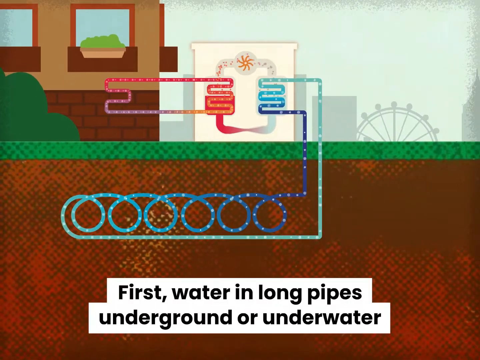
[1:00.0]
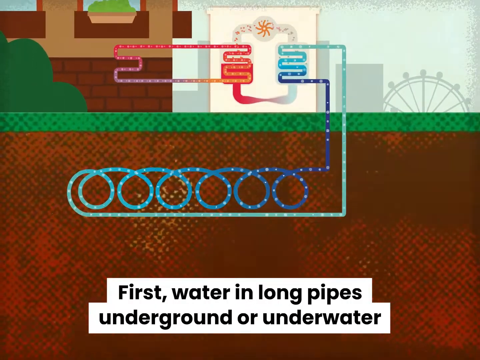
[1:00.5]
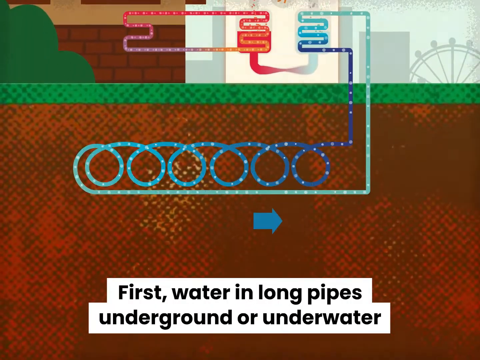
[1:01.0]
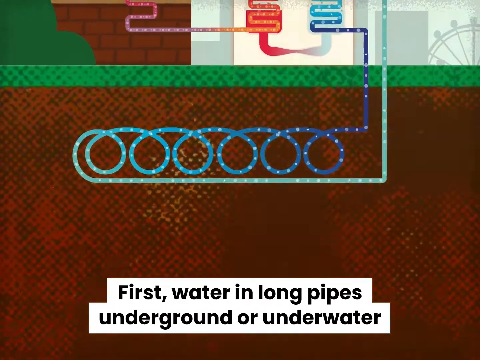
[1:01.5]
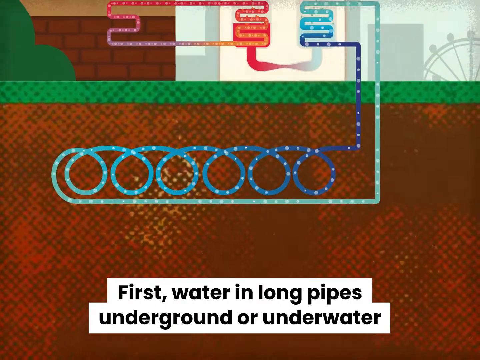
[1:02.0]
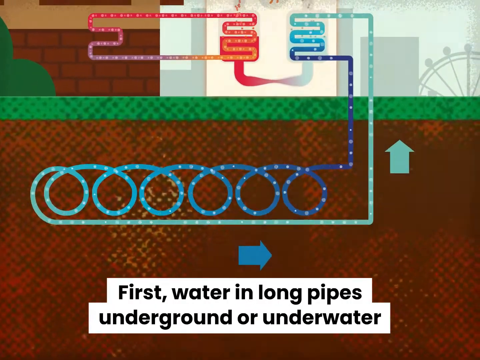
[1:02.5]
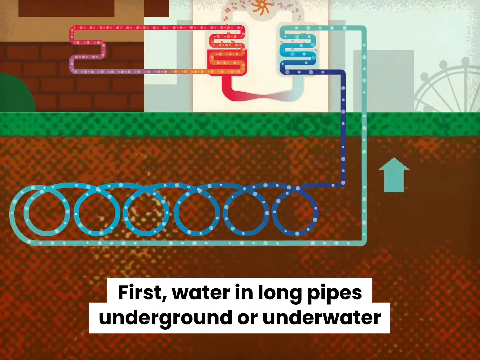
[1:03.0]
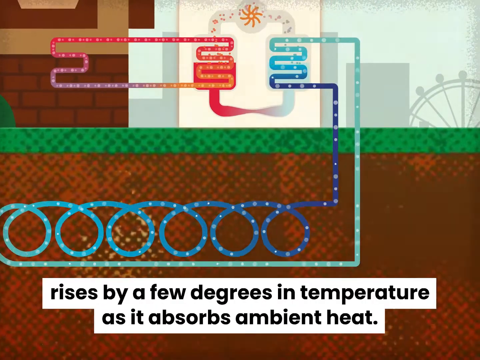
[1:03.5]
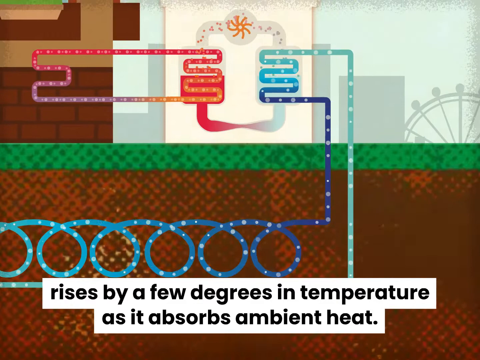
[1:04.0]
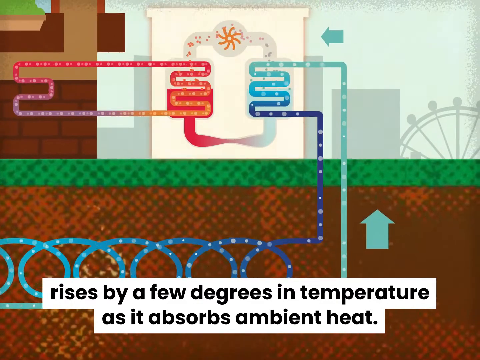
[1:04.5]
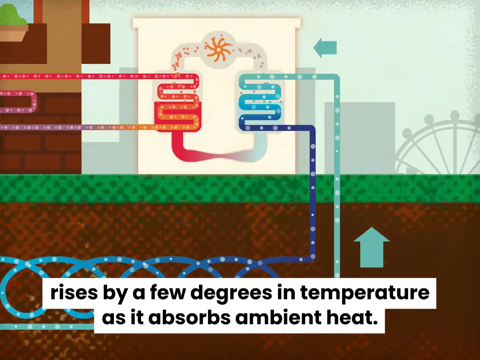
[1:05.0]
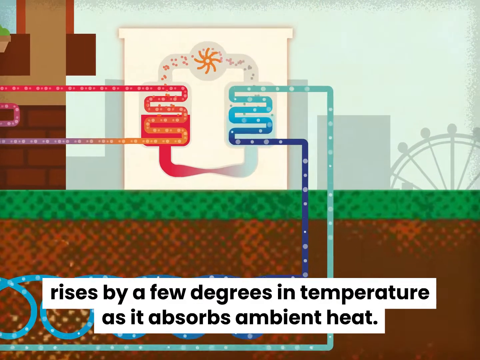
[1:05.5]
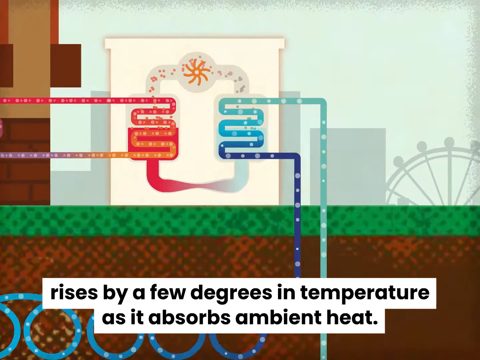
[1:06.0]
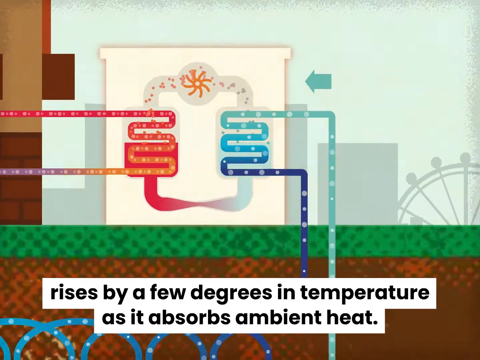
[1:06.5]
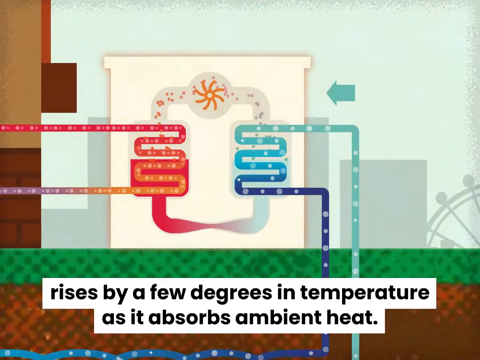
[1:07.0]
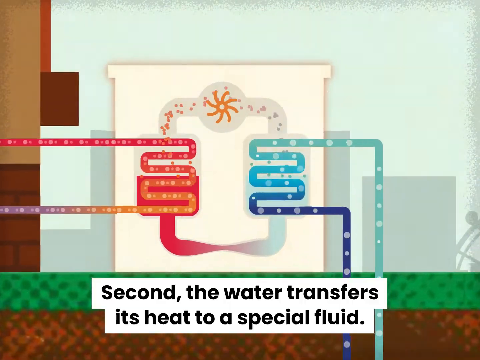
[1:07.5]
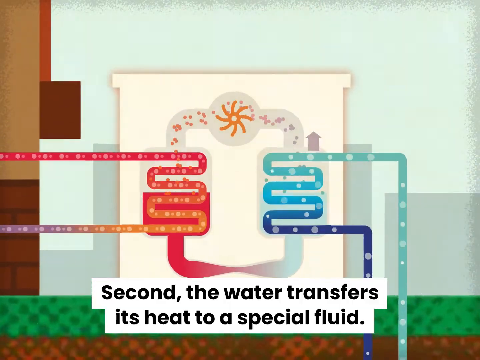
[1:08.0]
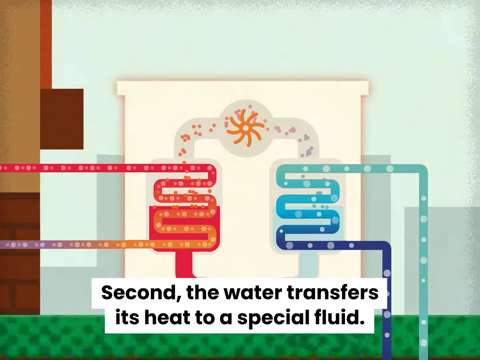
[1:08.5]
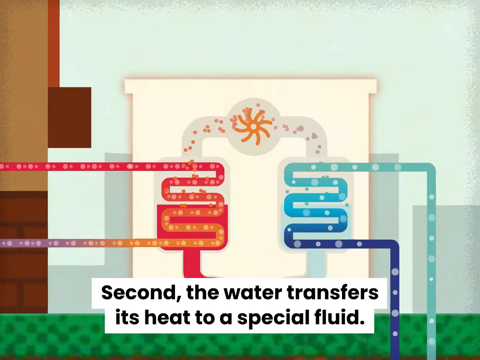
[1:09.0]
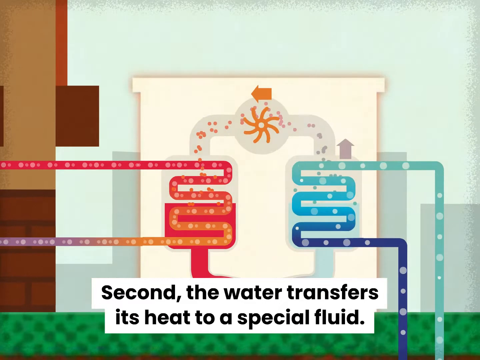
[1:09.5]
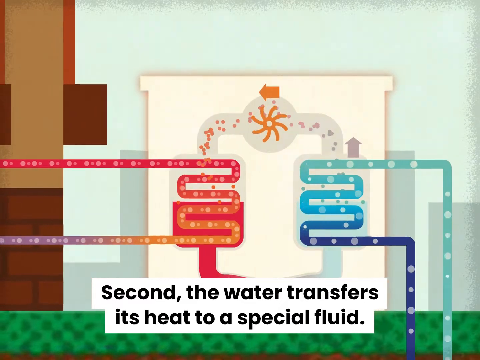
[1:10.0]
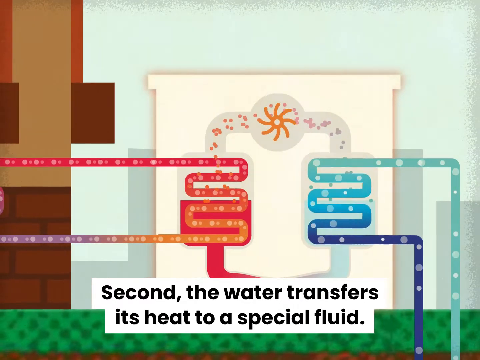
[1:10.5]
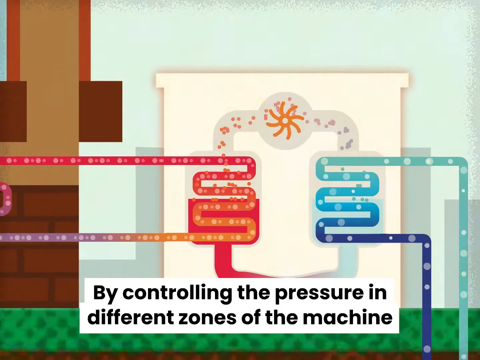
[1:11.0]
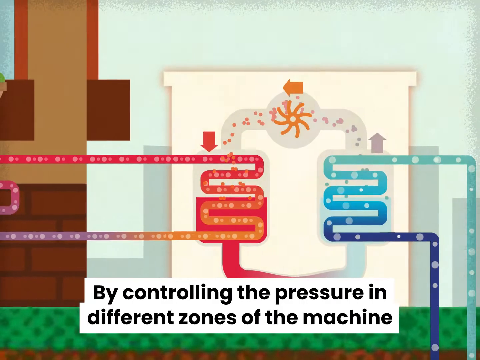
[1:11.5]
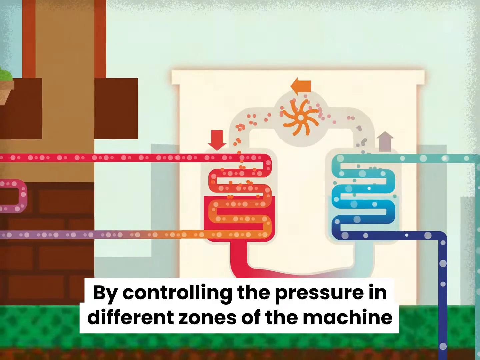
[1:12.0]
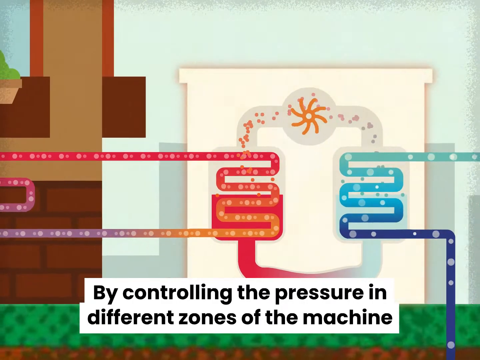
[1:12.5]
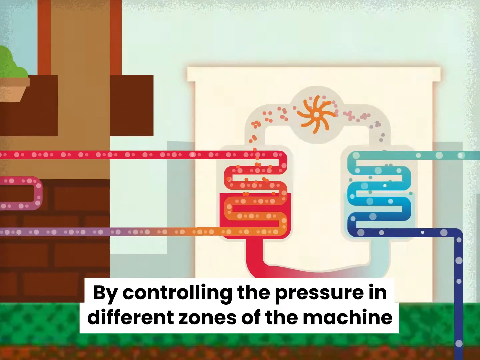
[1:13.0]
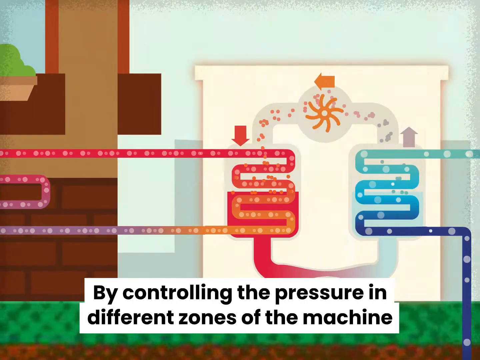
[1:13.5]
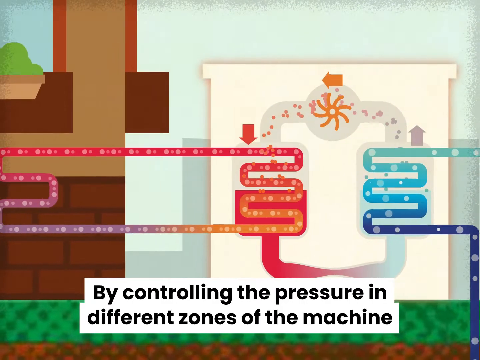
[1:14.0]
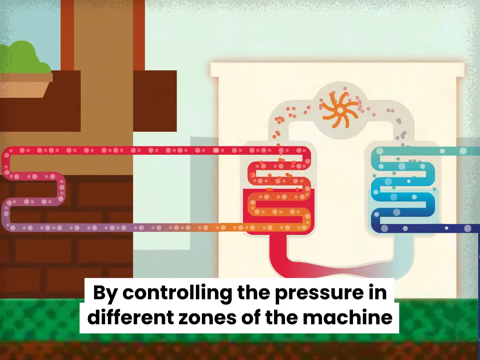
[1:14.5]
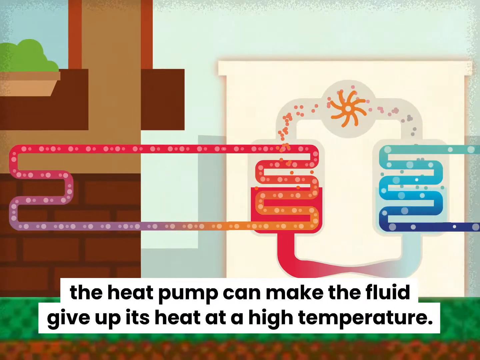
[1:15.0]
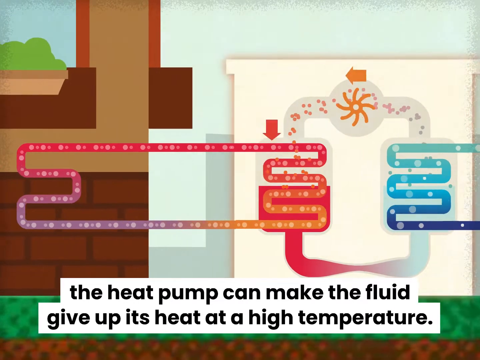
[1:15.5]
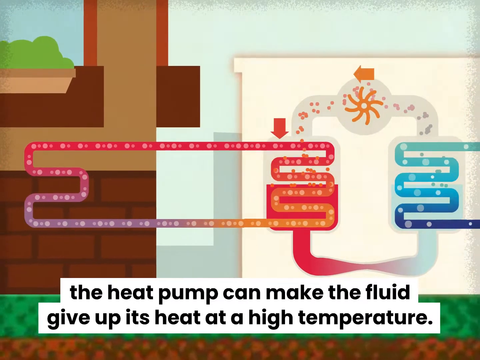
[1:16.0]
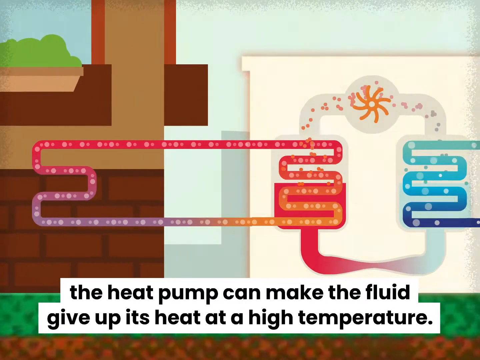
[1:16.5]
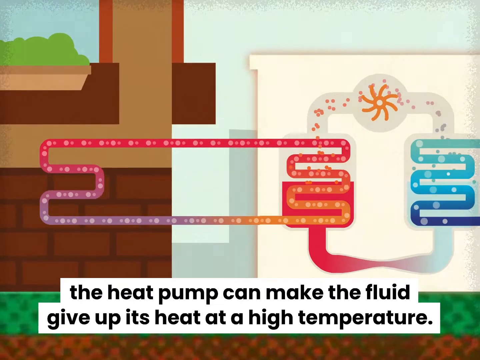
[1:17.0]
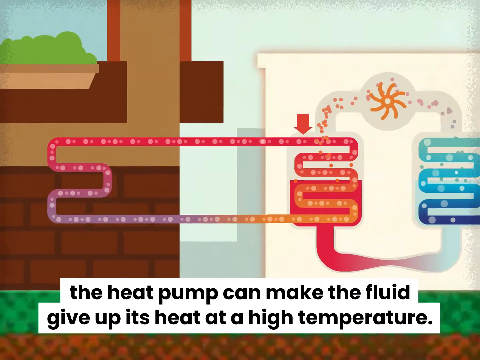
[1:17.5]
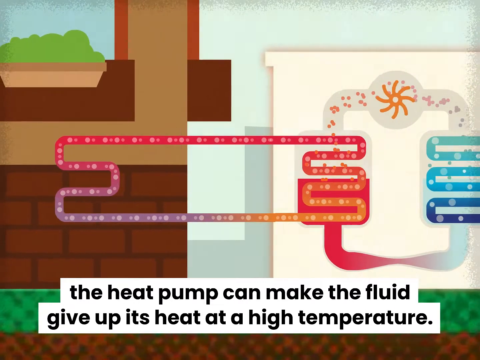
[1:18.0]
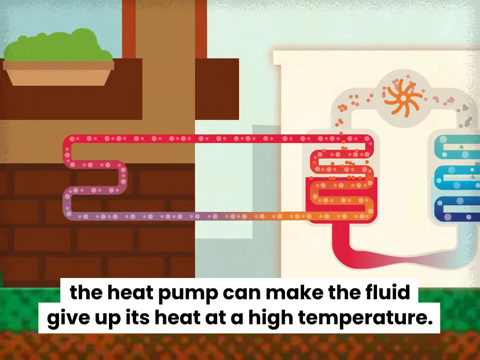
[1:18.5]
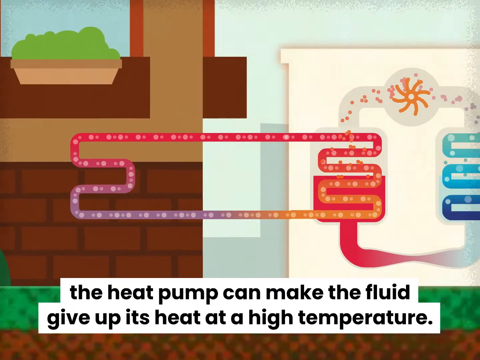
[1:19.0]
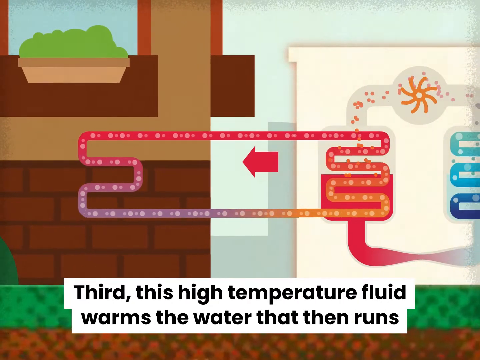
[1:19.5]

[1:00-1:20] A subtitle at the bottom reads "first, water in long pipes underground or underwater rises by a few degrees in temperature as it absorbs ambient heat. Second, the water transfers its heat to a special fluid by controlling the pressure in different zones of the machine. The heat pump can make the fluid give up its heat at a high temperature. Third," and then stops. The visual shows pipes that seem to transfer to each other: a long light blue pipe, a dark blue pipe that swirls around and becomes light blue, and a red and orange pipe on the left side that zigzags around, operating somewhat like a conveyor belt.